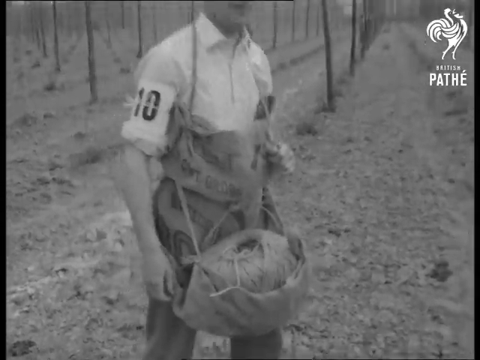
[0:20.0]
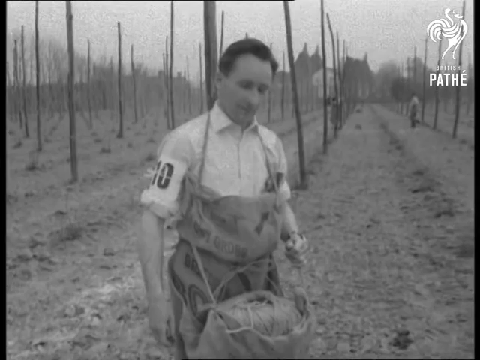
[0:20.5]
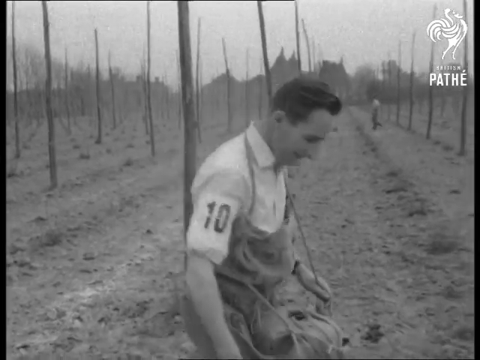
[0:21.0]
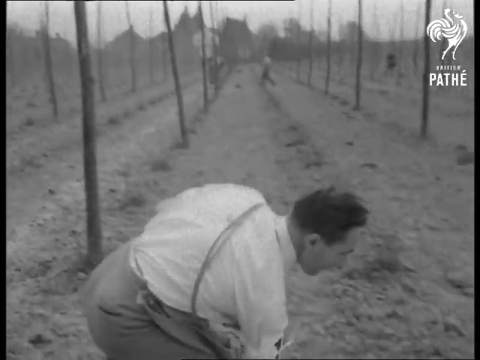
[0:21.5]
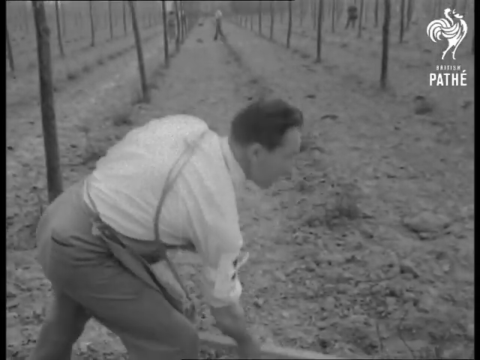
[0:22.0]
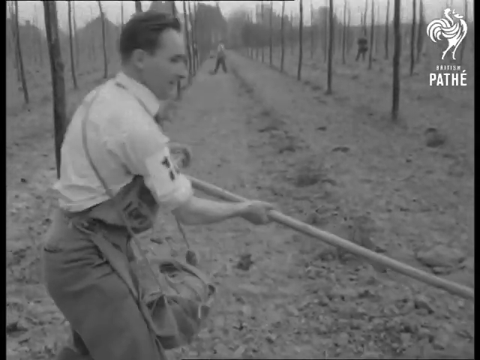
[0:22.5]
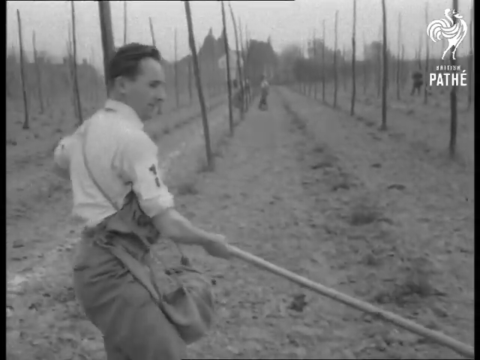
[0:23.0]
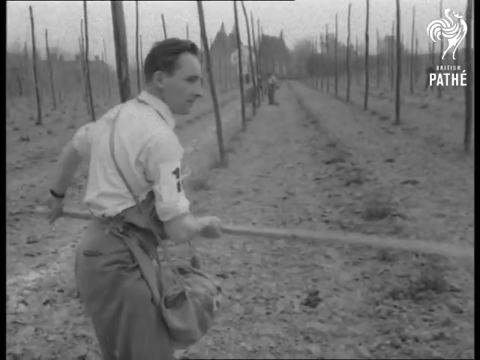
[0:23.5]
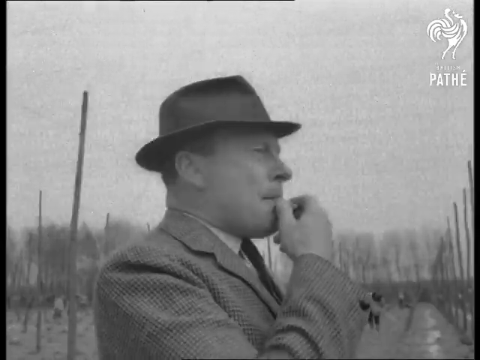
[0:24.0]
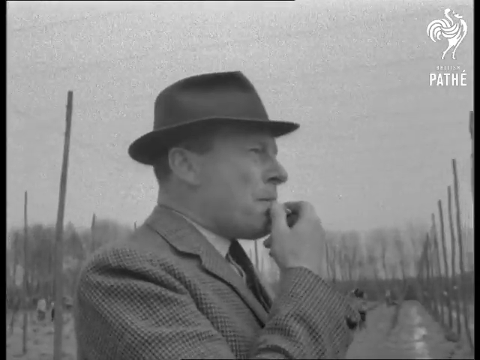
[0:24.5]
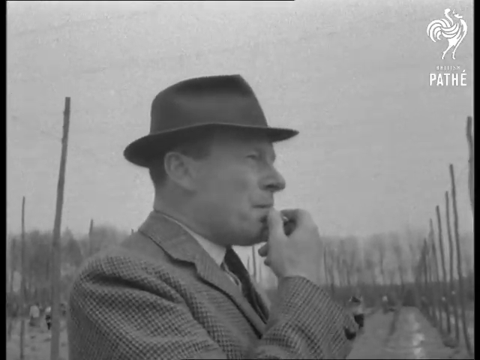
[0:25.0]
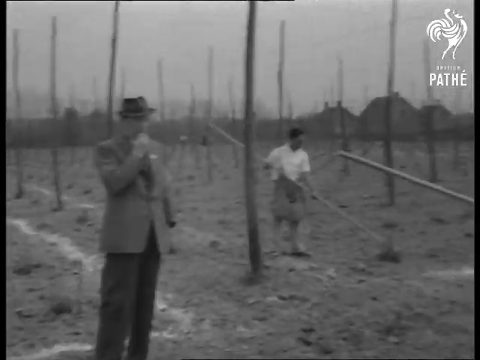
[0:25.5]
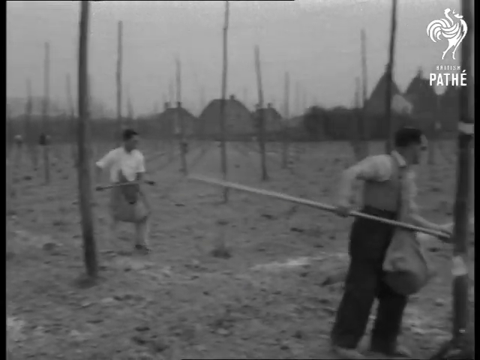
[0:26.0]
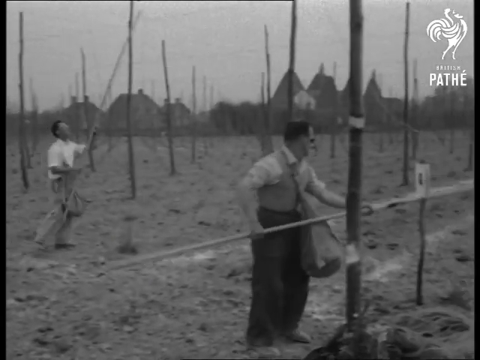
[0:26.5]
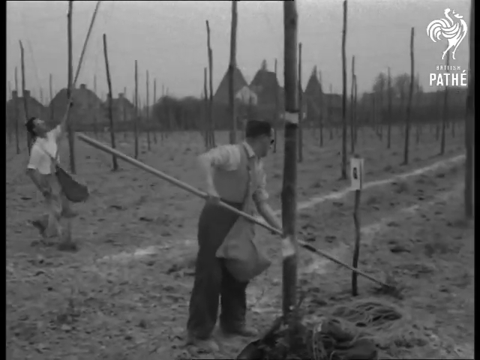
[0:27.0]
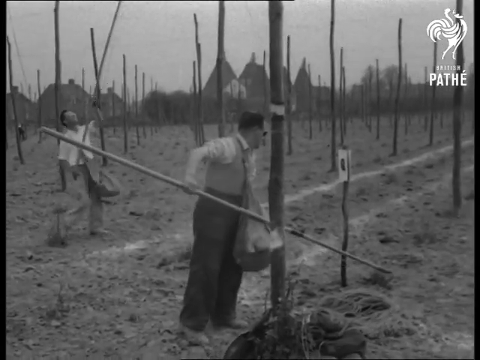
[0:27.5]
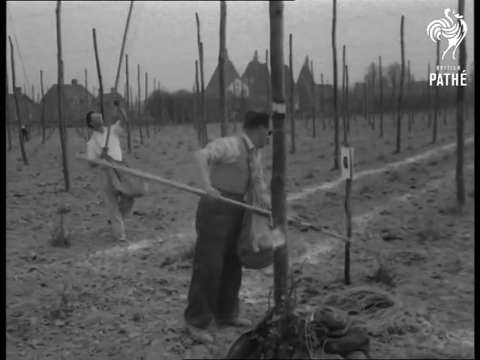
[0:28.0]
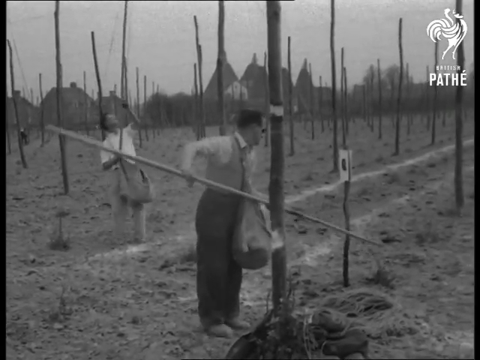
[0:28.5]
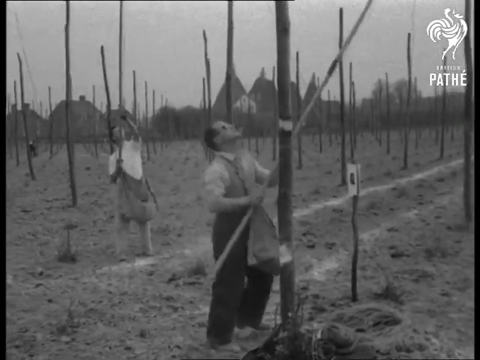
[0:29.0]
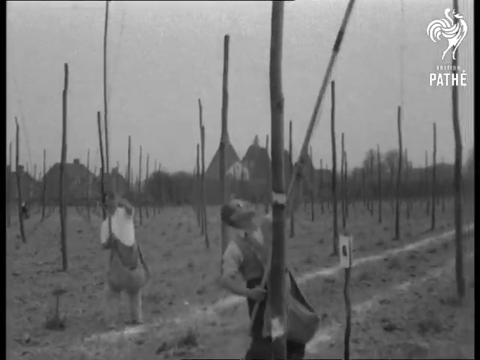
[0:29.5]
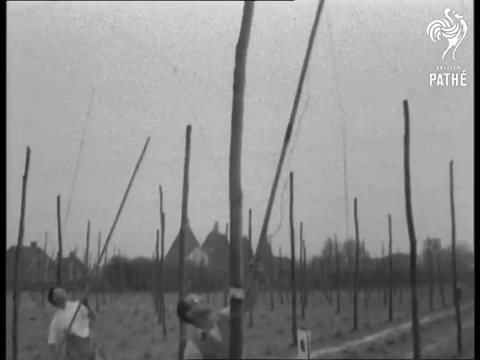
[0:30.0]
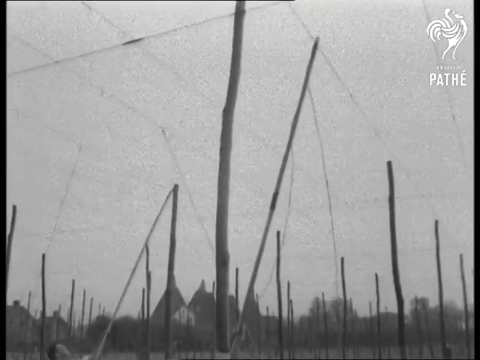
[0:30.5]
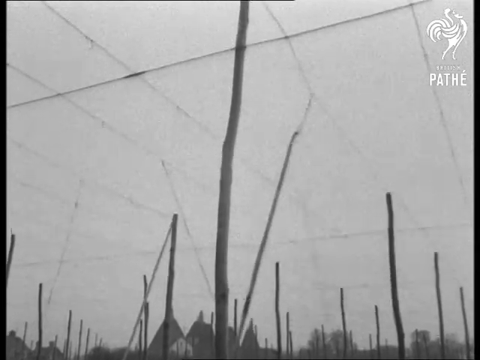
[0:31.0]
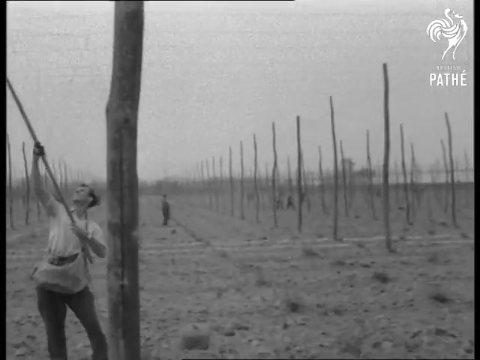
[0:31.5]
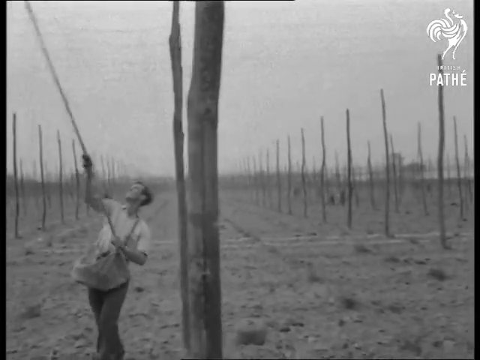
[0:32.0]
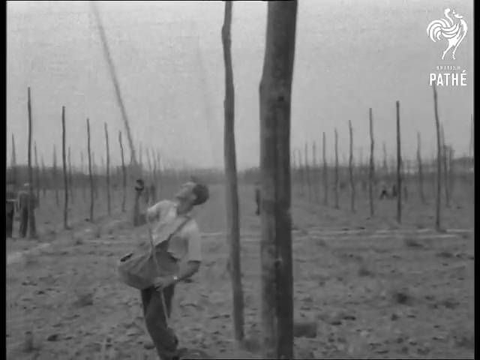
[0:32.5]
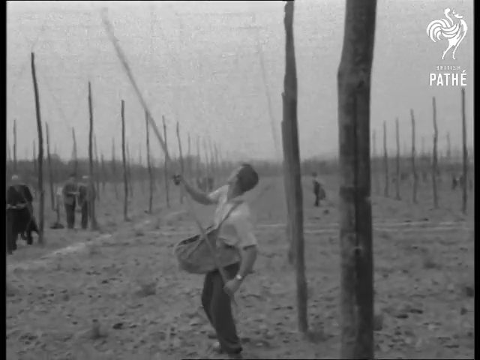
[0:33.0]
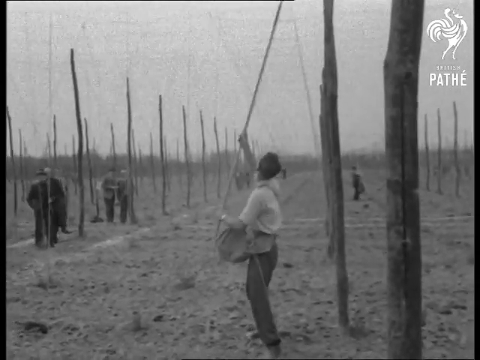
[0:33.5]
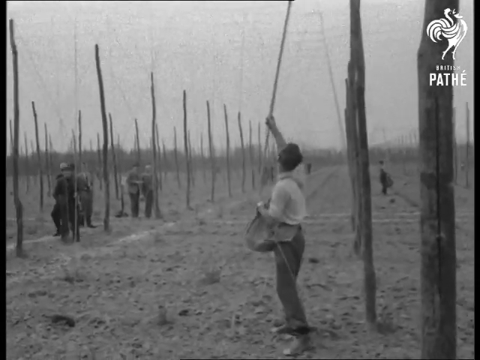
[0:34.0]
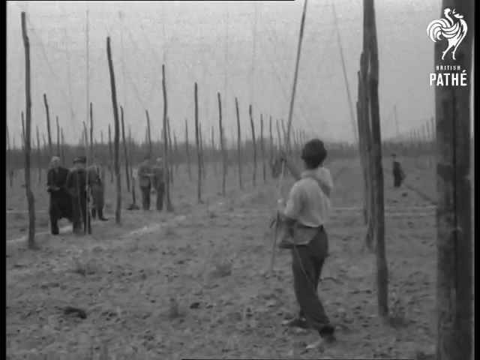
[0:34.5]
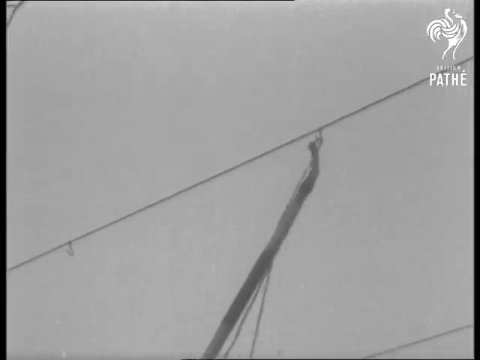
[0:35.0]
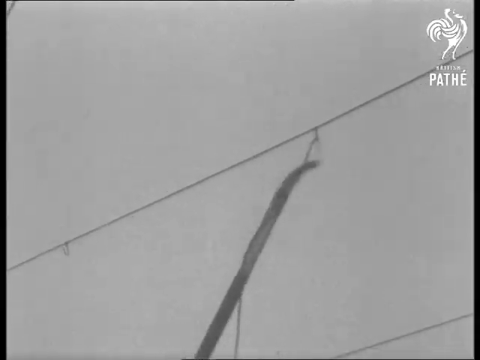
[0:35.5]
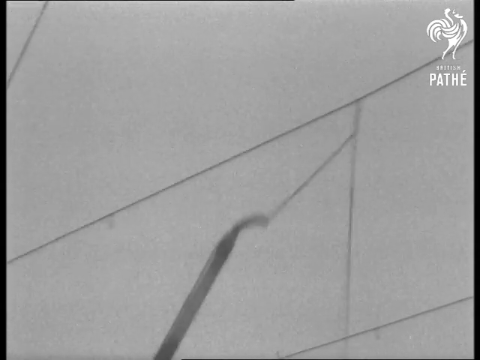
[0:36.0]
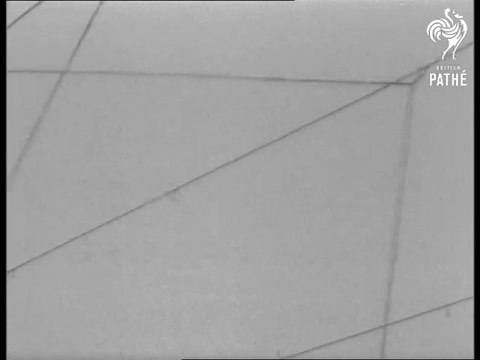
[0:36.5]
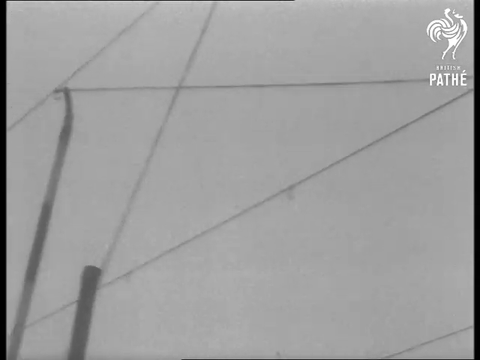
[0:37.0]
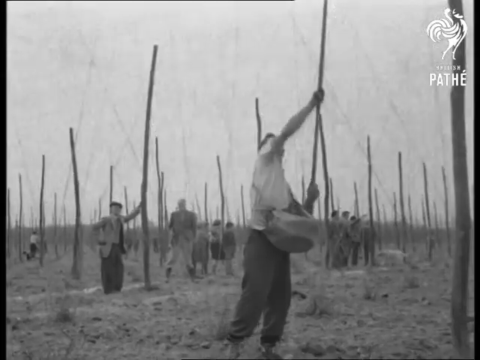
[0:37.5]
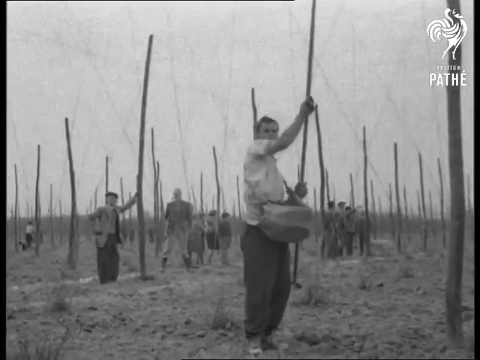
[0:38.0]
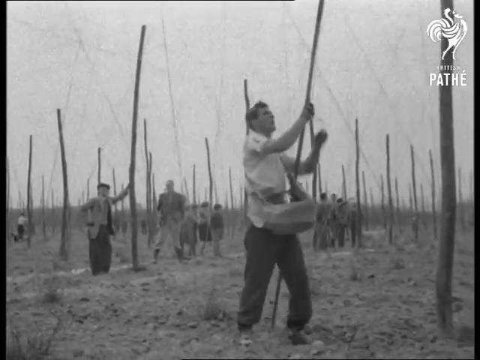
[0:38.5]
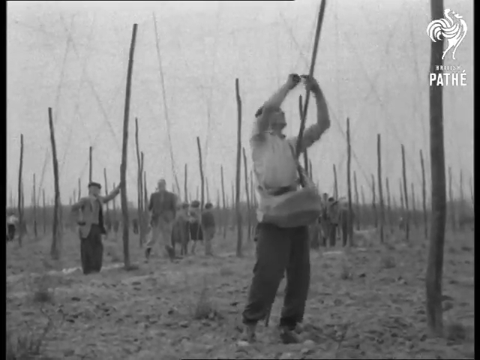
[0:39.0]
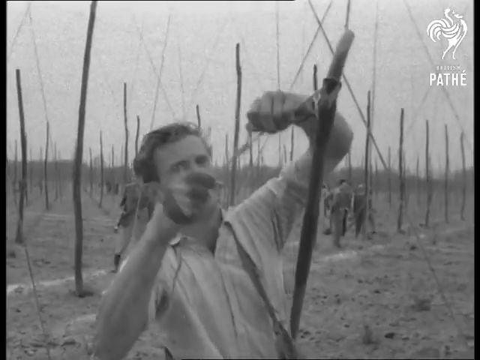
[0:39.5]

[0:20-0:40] A man picks up a pole in a large area of land where sticks are put into the ground in rows upon rows. He picks up the pole-like object and gathers a string that is on the ground. A satchel is across his body, and inside it there appears to be a bag of large thread. Other people behind him do the same thing. A man in the middle blows a whistle, apparently signaling the participants to start.